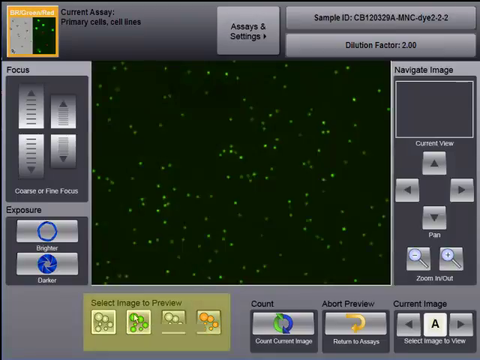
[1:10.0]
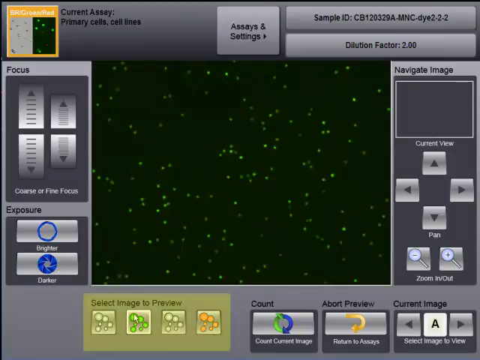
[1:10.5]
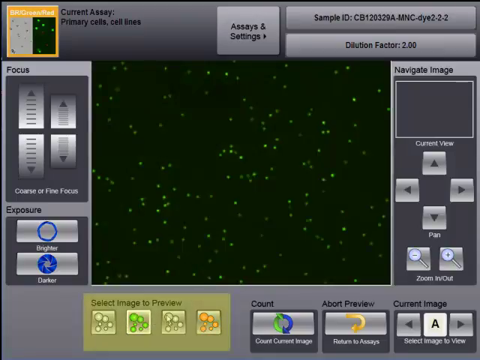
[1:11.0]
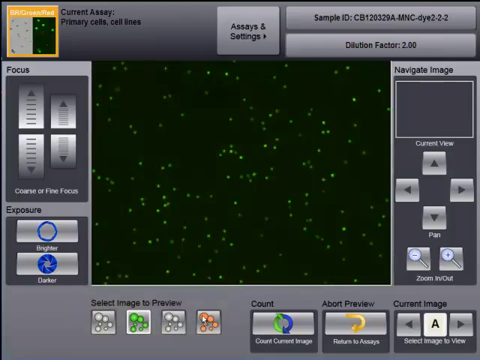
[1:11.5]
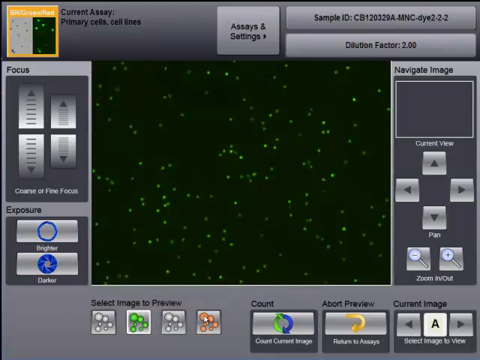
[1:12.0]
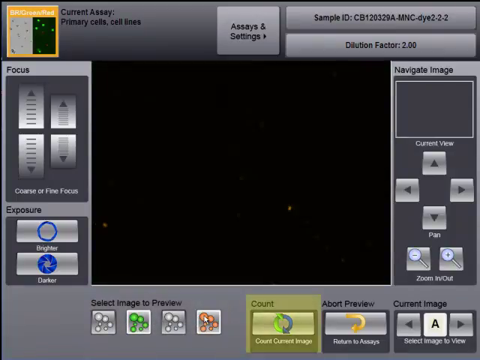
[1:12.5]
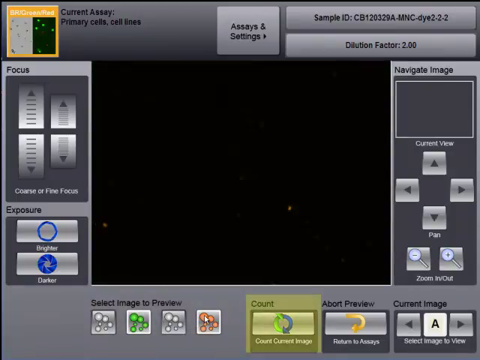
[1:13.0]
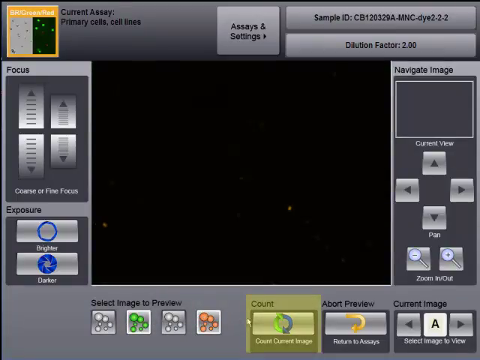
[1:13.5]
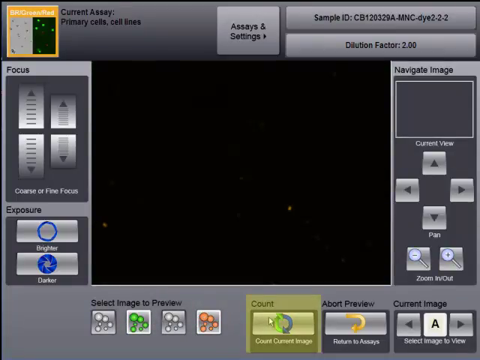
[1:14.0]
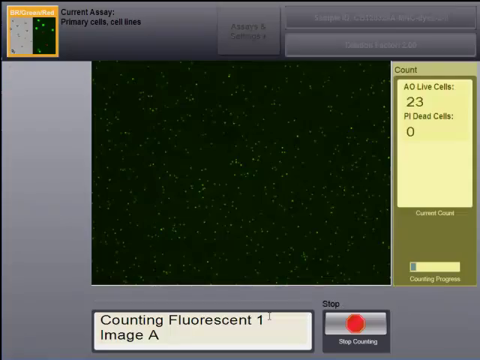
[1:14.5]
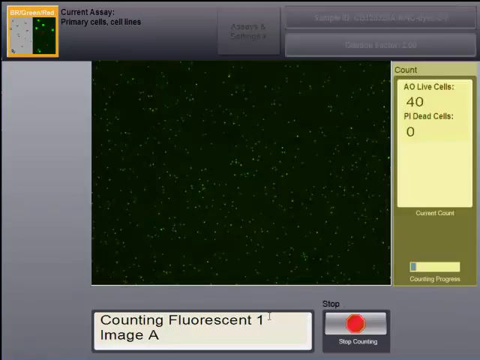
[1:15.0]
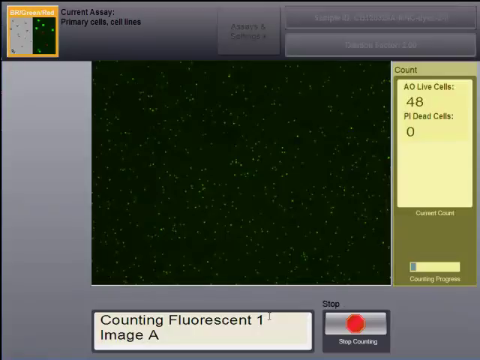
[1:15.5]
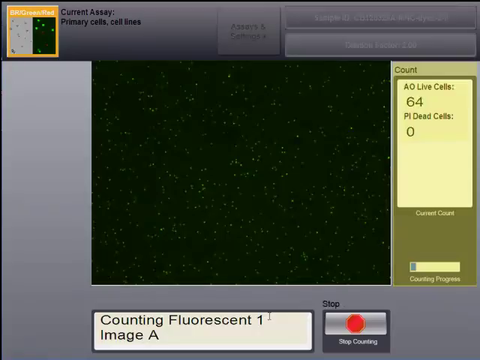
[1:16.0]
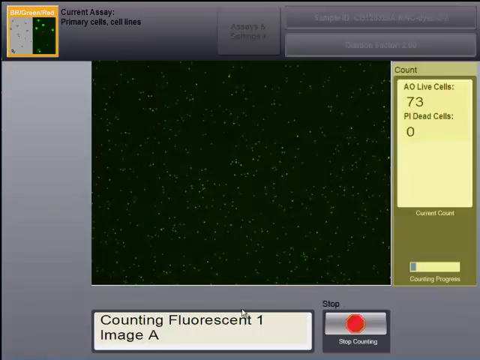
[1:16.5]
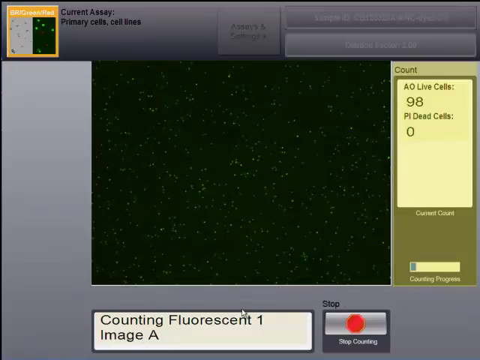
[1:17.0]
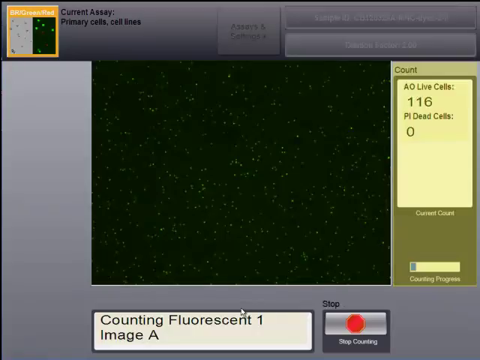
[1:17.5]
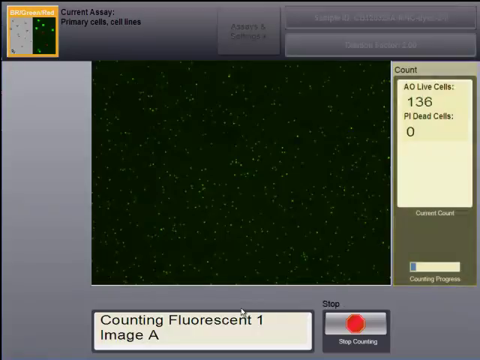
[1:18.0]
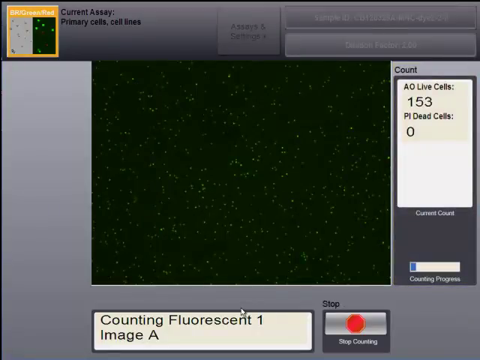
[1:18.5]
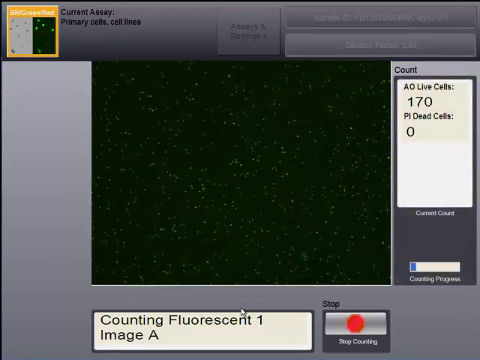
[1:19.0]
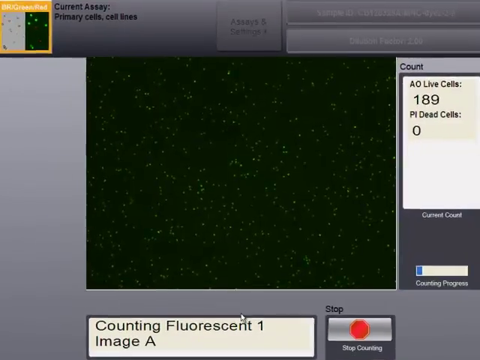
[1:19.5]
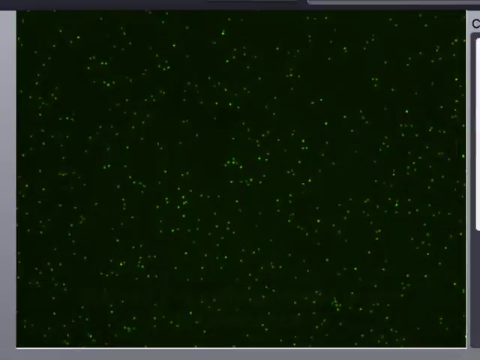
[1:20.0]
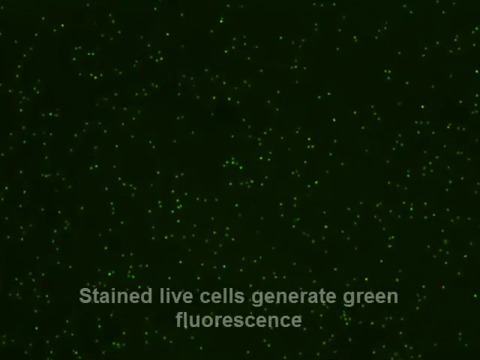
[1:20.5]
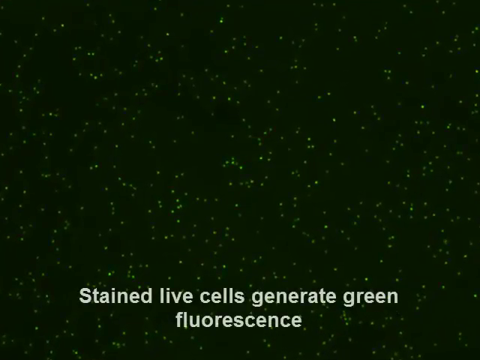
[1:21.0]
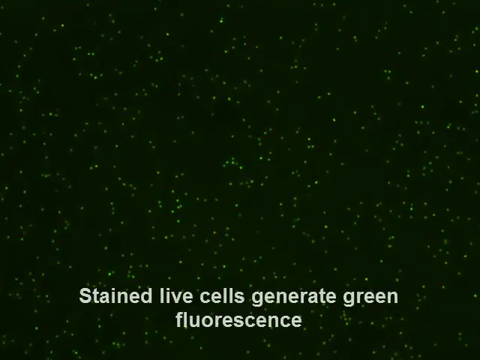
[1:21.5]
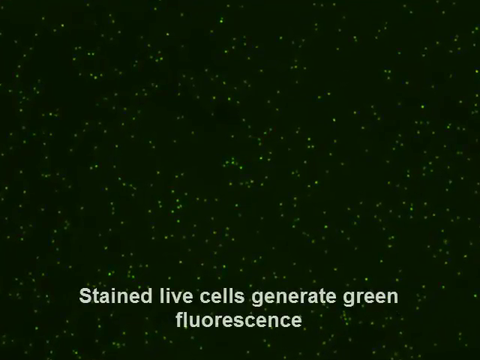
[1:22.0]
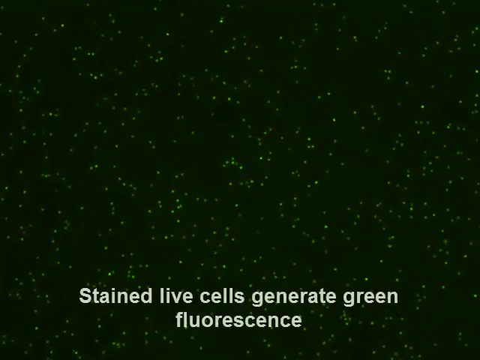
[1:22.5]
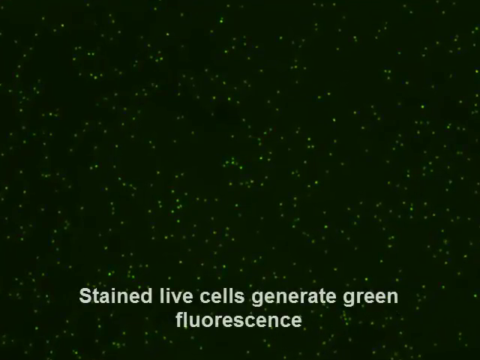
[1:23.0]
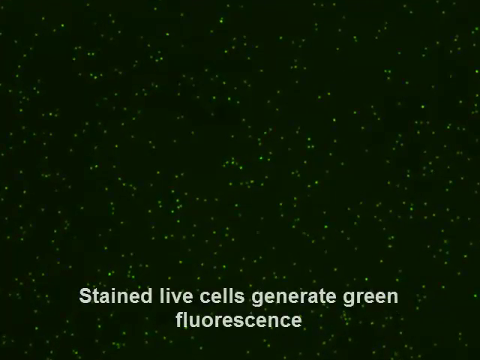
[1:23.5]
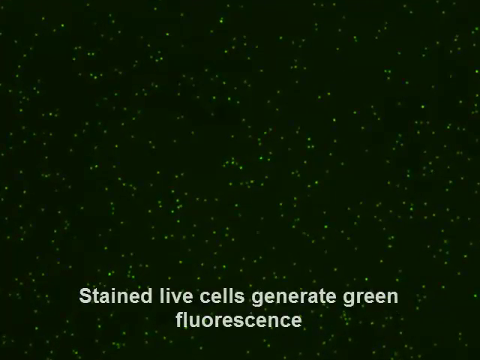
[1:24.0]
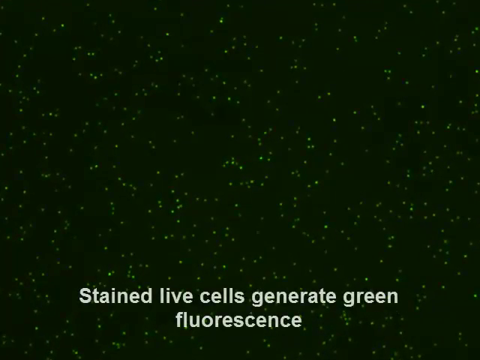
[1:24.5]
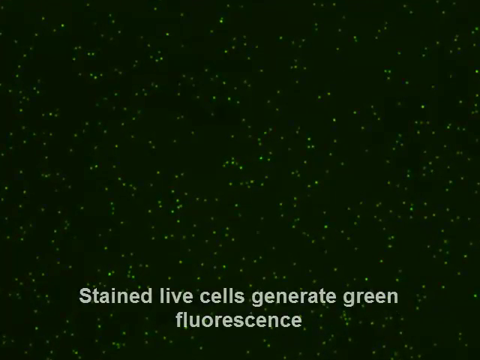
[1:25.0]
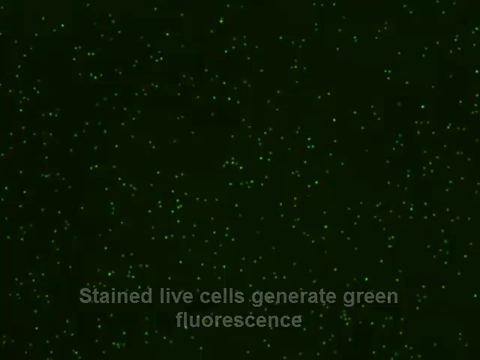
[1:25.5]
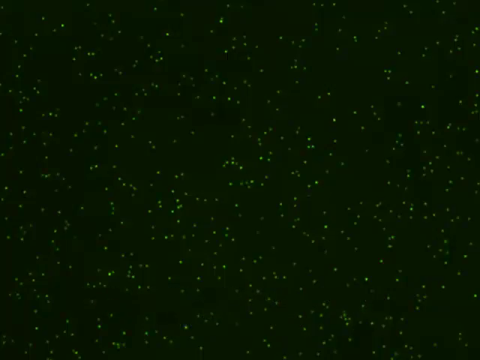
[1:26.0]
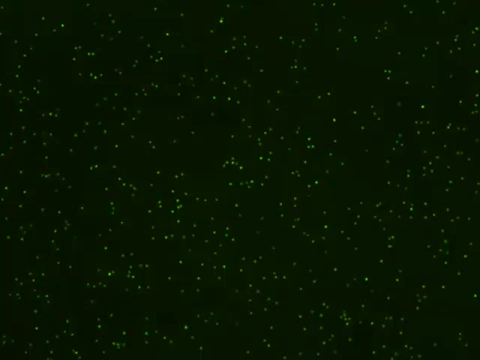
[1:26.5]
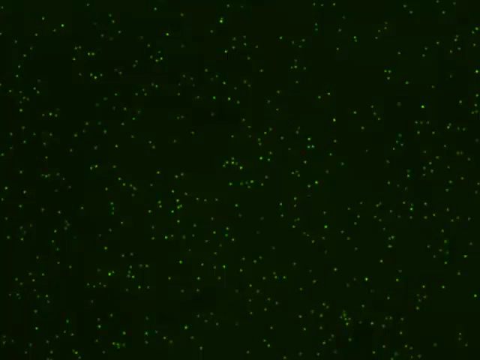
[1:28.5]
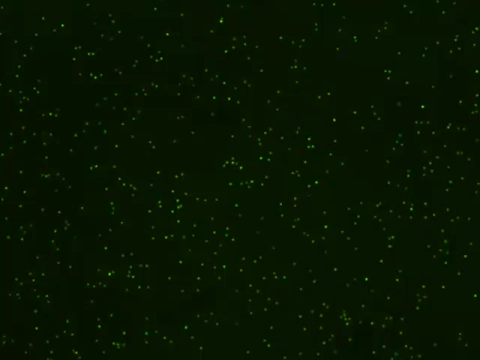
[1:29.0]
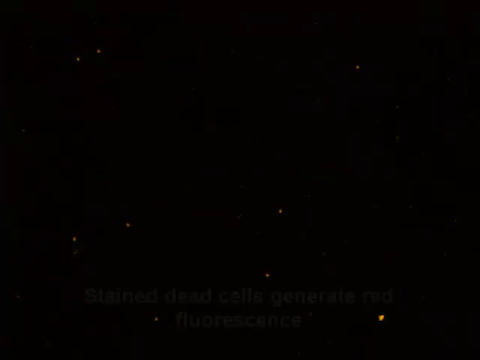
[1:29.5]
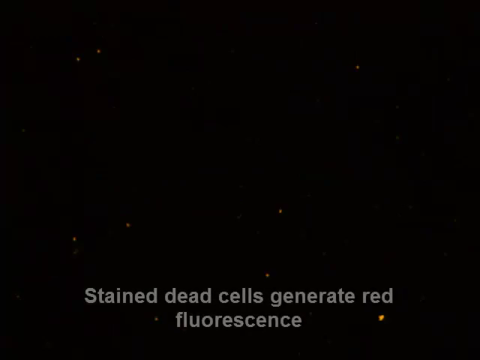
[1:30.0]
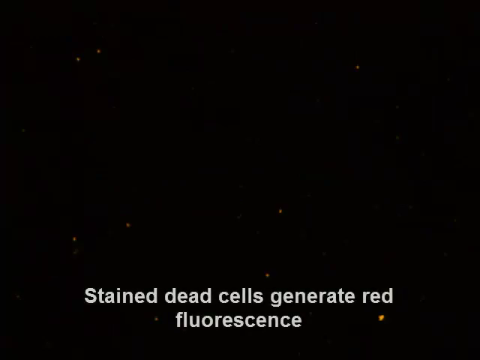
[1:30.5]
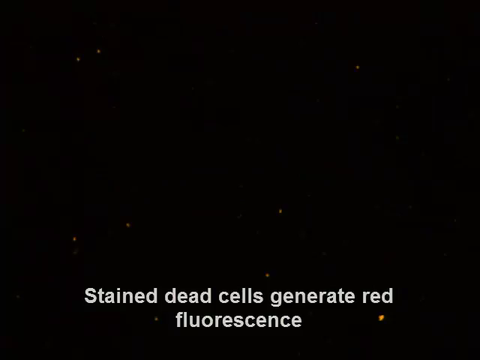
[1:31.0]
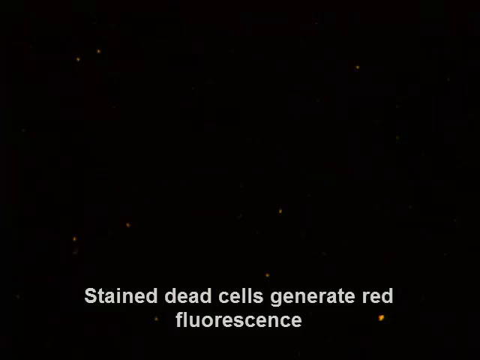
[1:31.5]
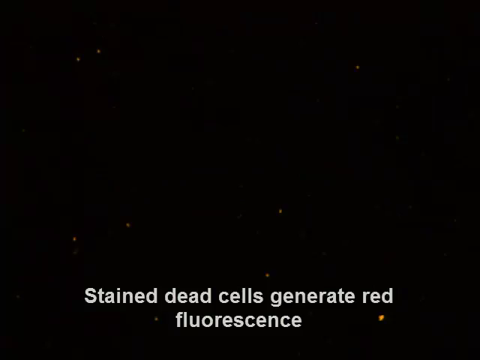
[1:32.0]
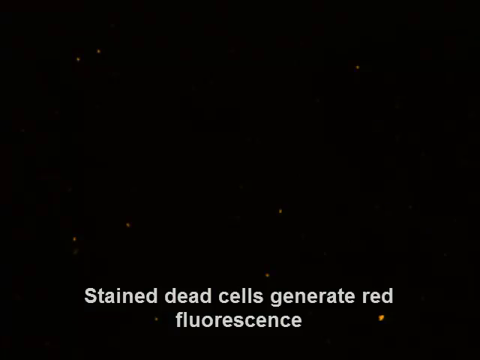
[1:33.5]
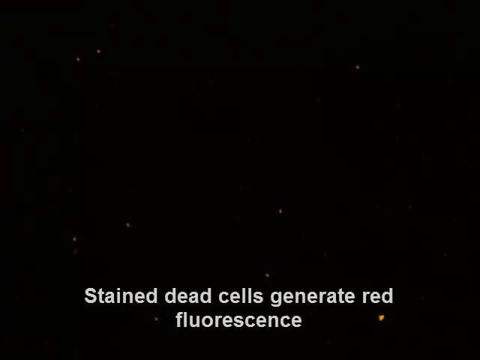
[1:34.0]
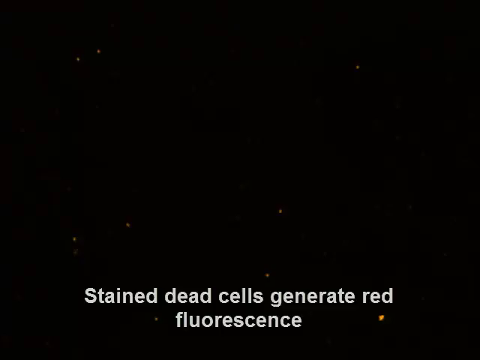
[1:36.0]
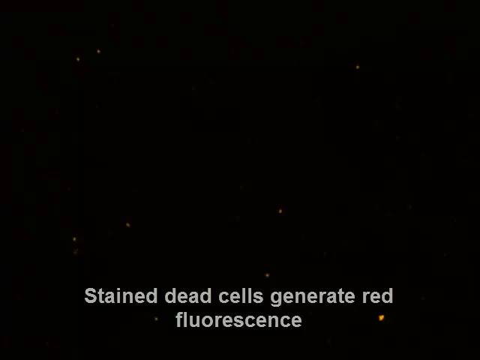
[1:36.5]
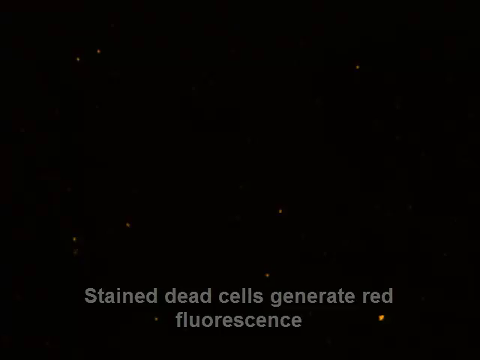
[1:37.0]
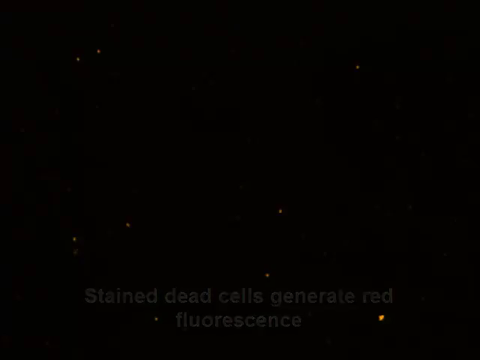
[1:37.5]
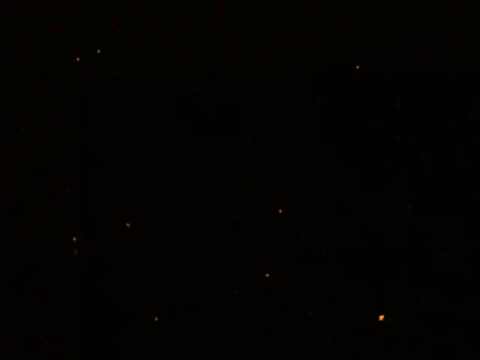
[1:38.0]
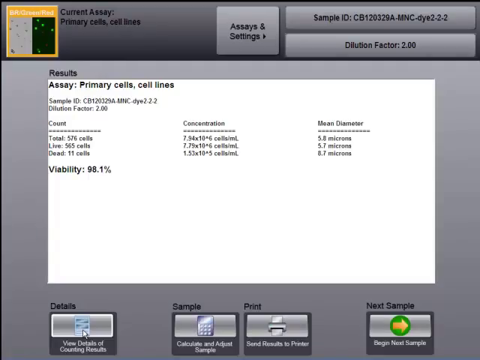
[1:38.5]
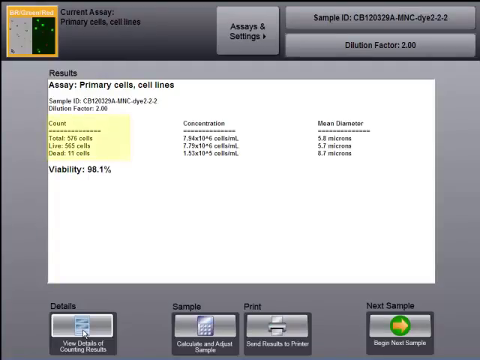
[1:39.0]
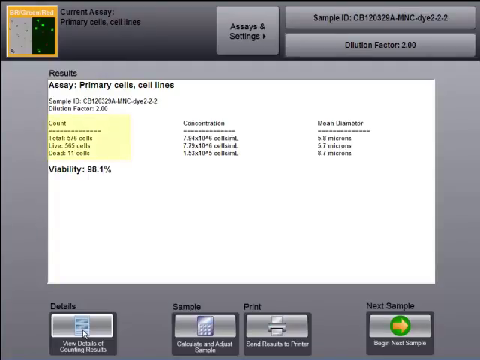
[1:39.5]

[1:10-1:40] The cellometer screen shows a dilution factor of 2.00 selected and a sample ID listed in the upper right; the sample is dyed. In the center of the screen is a microscopic view of the sample: green circles, individual cells, against a black background. A mouse pointer selects an image to preview, and the screen changes as the selected image changes. A button labeled "Count" is clicked, and the machine starts counting fluorescent cells, giving the numbers of both live and dead cells, with the live count increasing into the hundreds. Explanatory text on the screen states that stained live cells generate green fluorescence, while stained dead cells generate red fluorescence in the selected dye. The green cells against the black background are shown, and then a screen counts the live and dead cells: over 500 live cells and only 11 dead cells, giving a calculated viability of 98.1 percent.